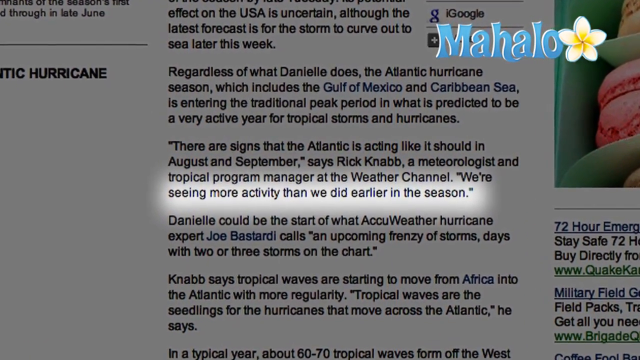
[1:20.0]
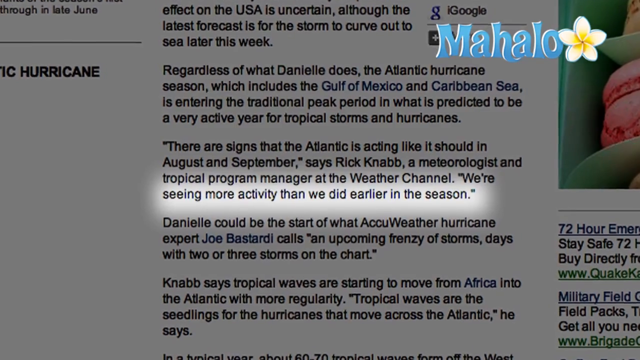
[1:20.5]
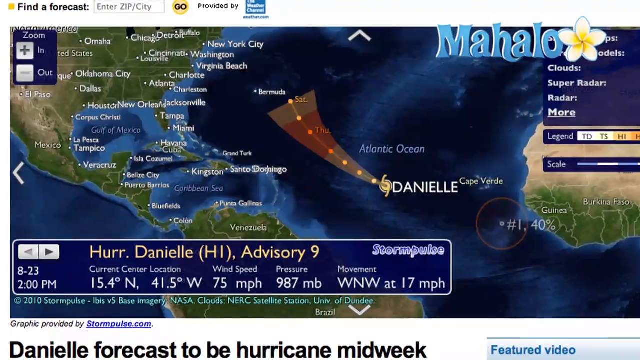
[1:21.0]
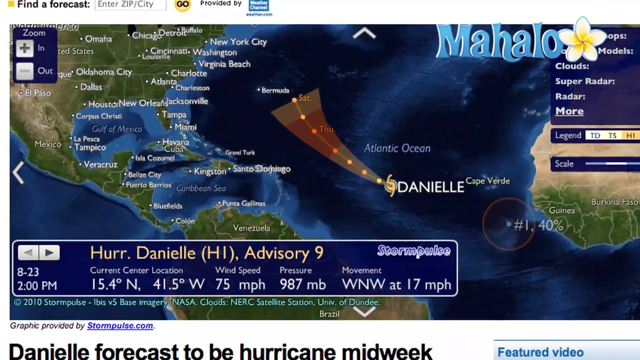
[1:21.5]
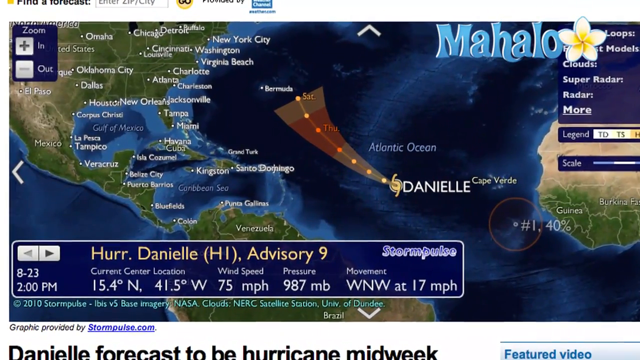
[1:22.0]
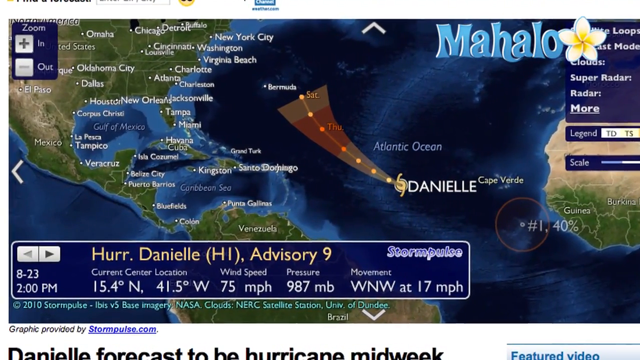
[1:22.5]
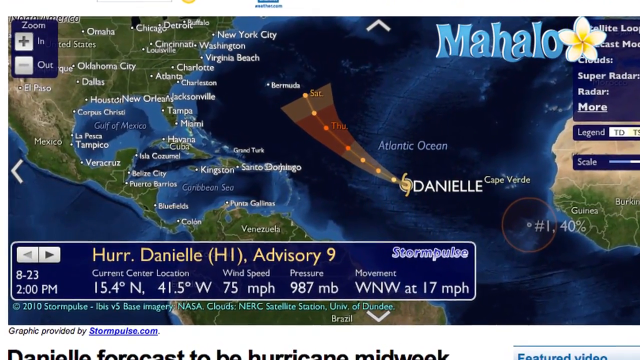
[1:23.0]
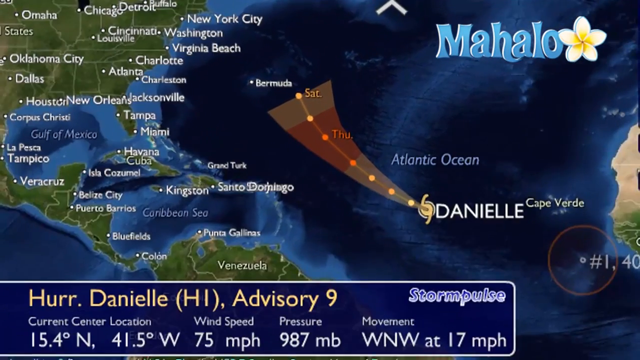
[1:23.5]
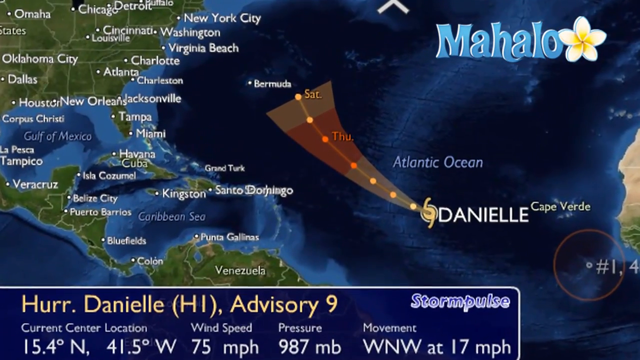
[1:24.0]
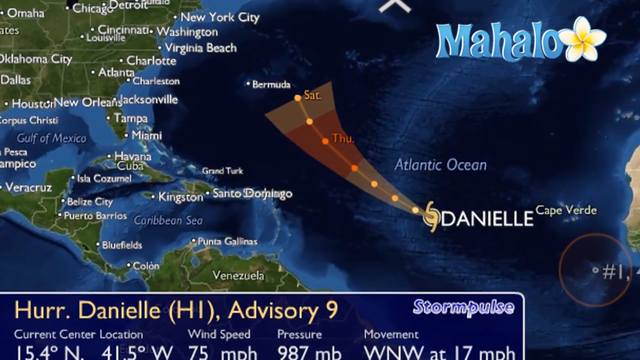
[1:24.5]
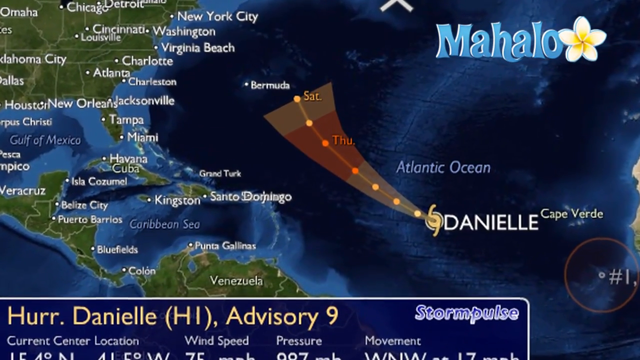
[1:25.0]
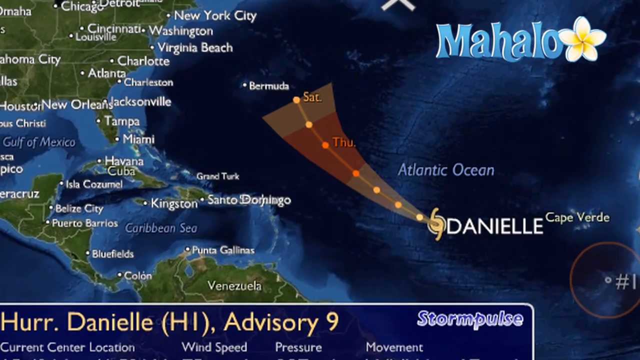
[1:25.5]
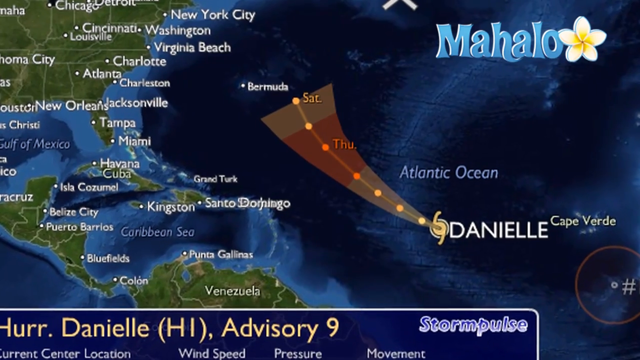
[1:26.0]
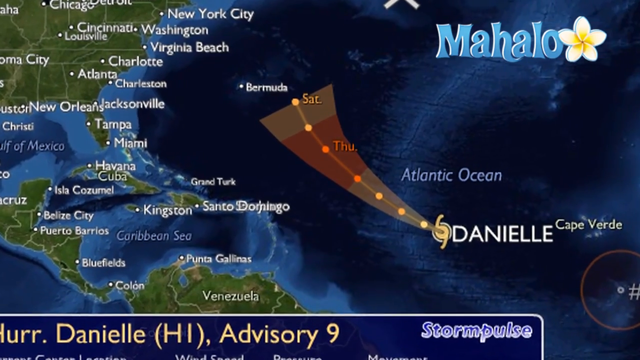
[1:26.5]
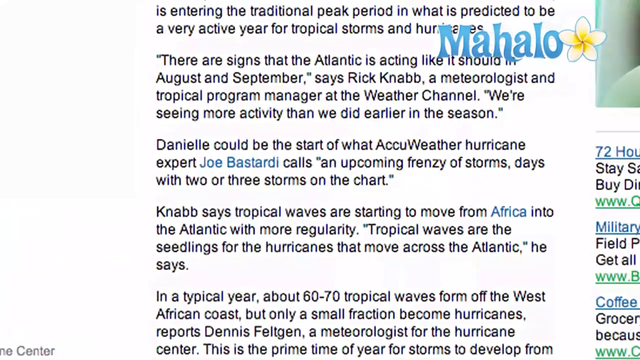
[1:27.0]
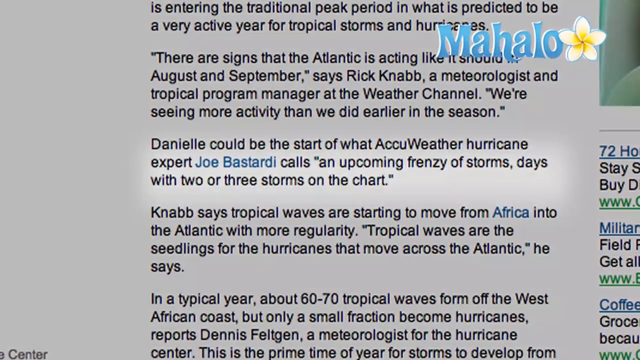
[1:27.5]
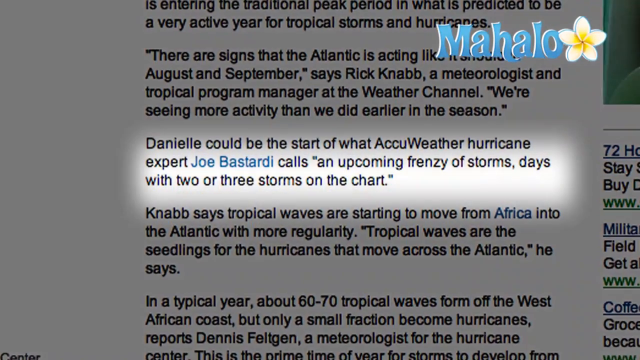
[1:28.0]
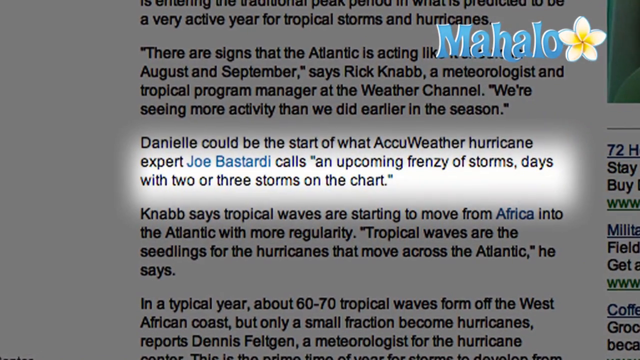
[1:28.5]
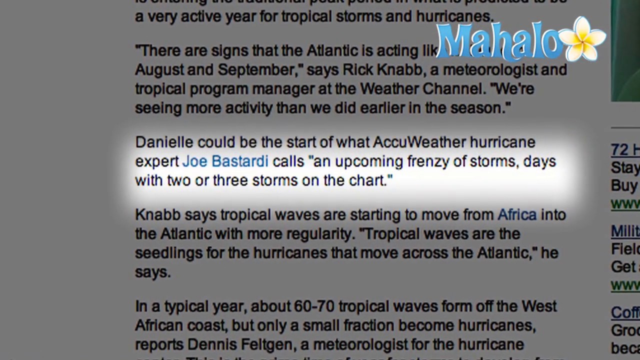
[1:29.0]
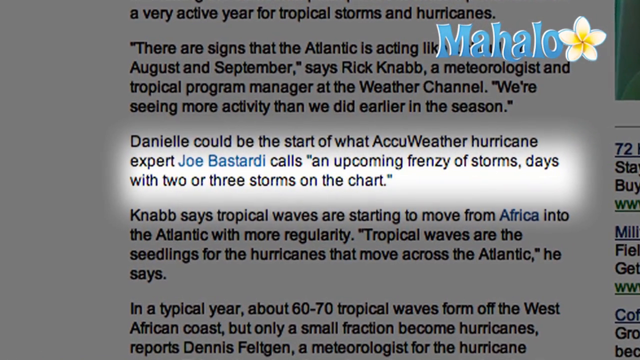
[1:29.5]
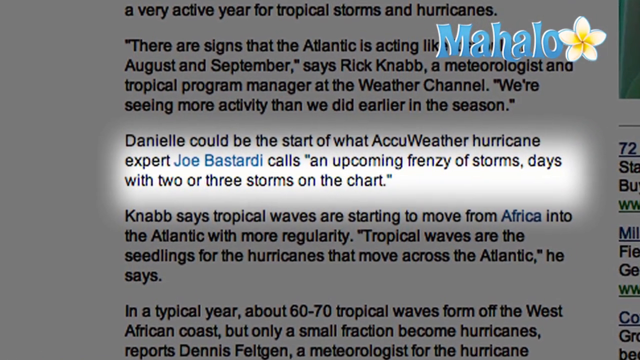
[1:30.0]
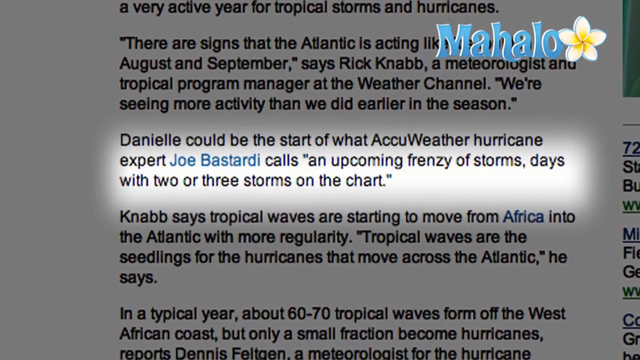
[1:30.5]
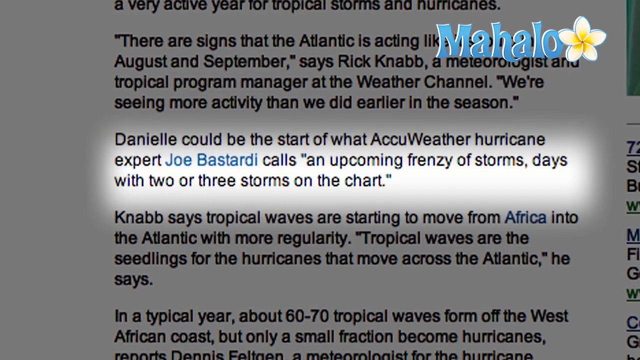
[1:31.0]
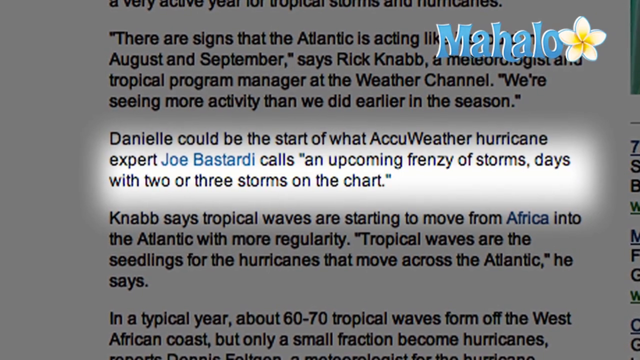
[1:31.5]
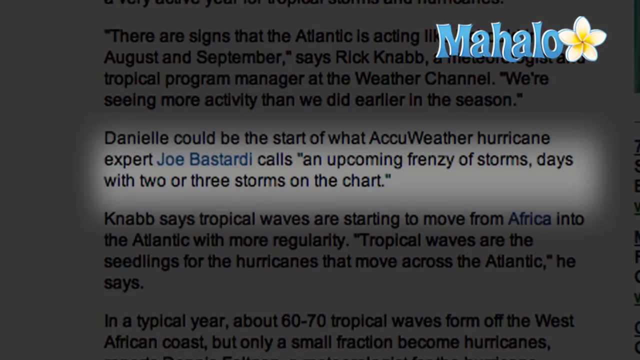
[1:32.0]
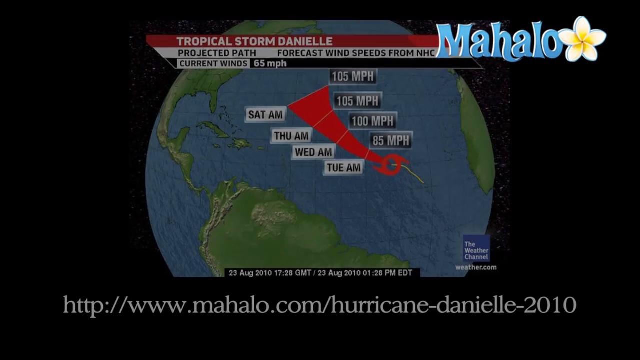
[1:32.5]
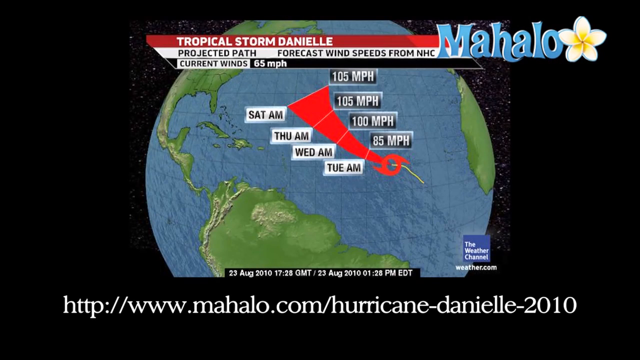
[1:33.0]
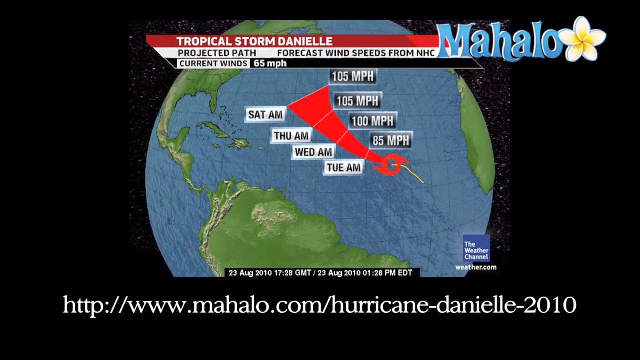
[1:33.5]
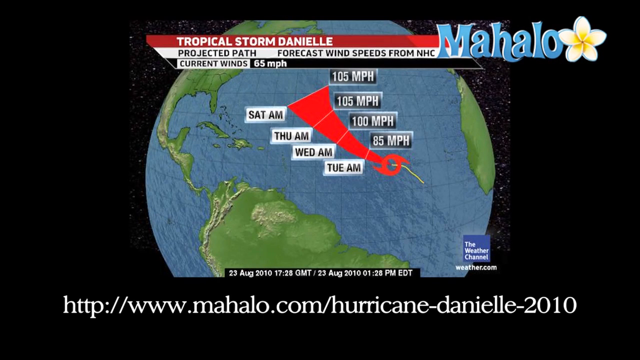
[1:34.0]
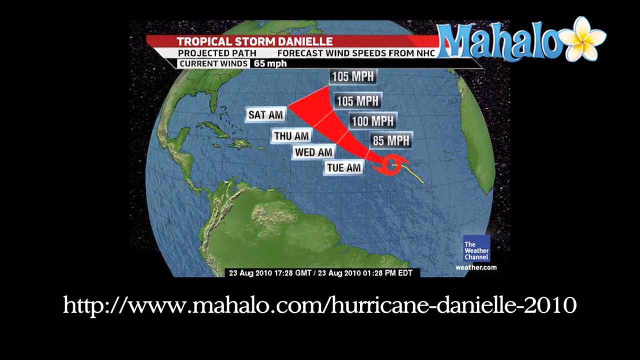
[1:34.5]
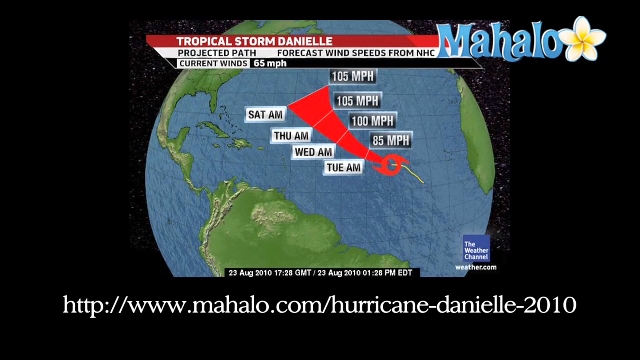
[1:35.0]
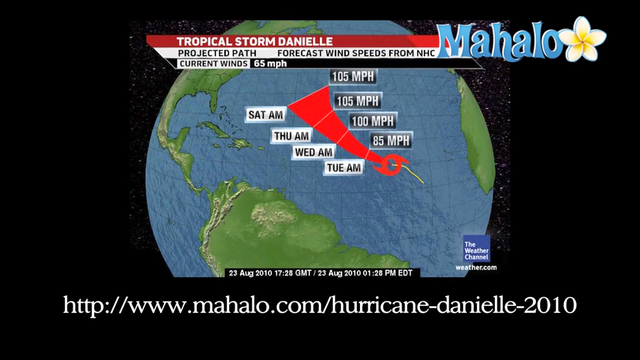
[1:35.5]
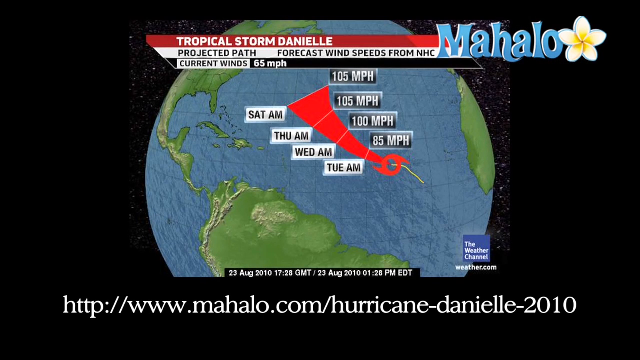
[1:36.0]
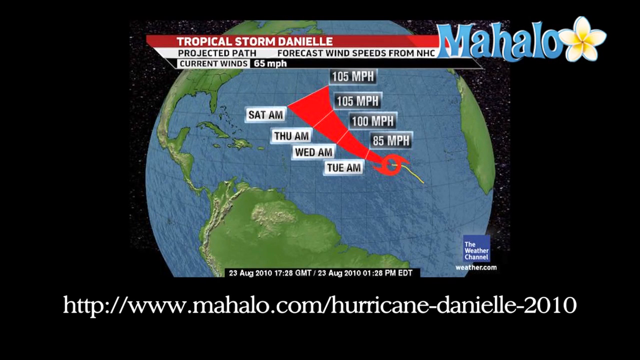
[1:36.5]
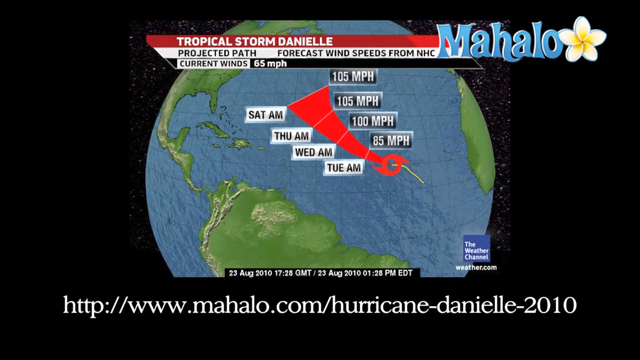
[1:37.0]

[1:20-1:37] An article shows the line "we are seeing more activity than we did early in the season". A picture of the Atlantic Ocean follows, with a hurricane coming from a center and about to hit Bermuda with a projected gust. Text reads "Daniele, that could be the start of what". A track of Daniele shows projected forecast winds of 85 mph at the start and 100 mph on Saturday.